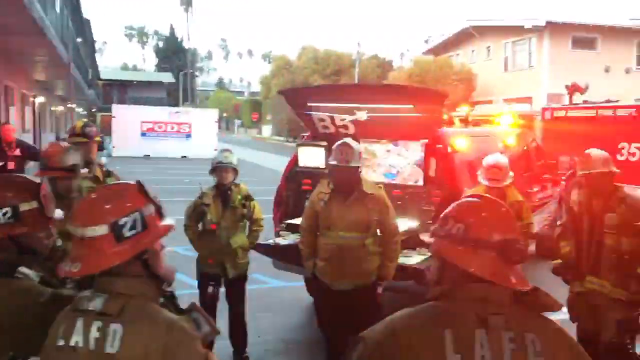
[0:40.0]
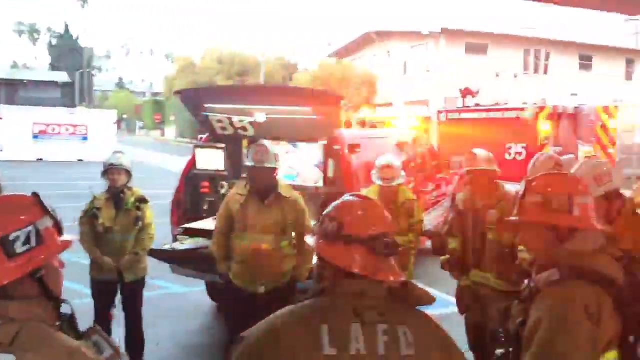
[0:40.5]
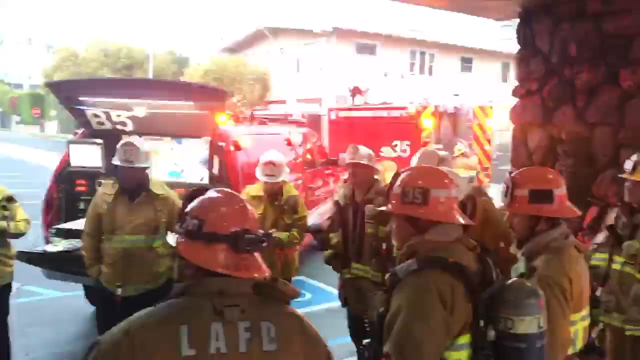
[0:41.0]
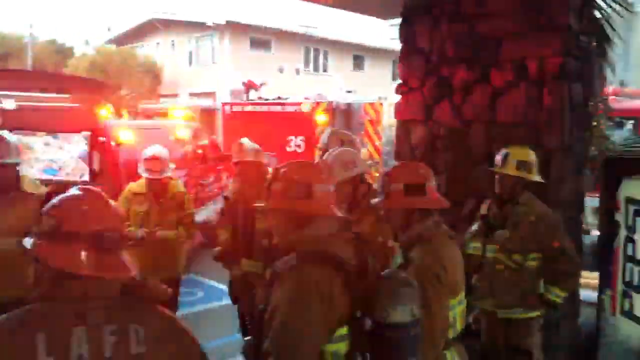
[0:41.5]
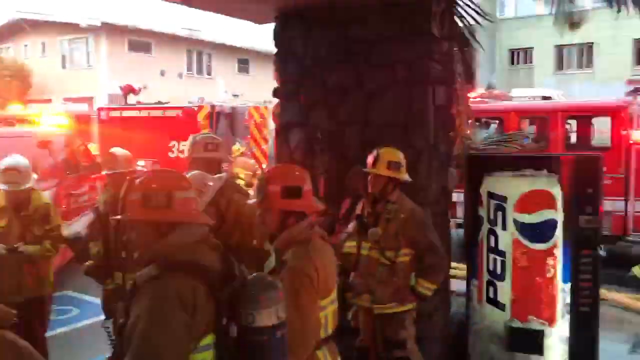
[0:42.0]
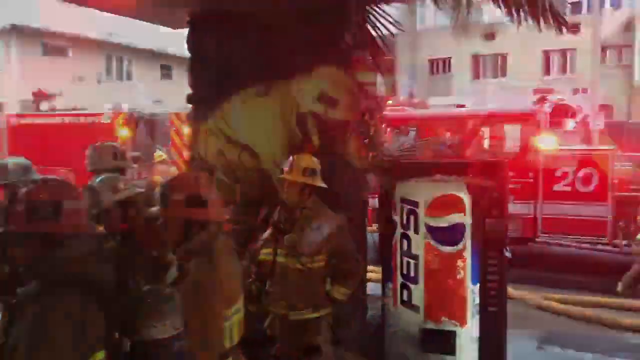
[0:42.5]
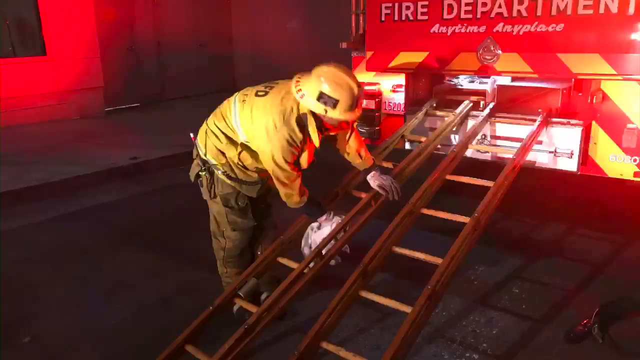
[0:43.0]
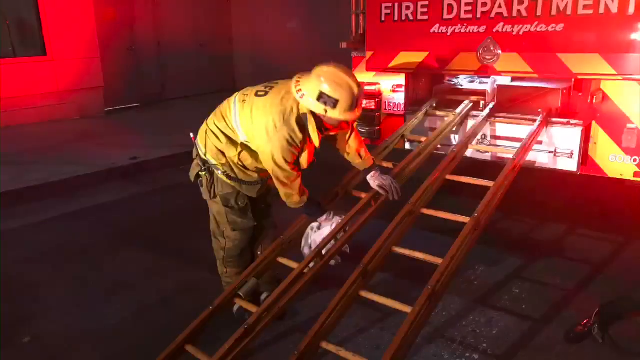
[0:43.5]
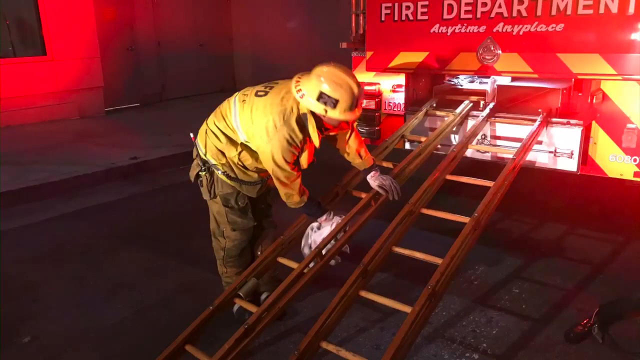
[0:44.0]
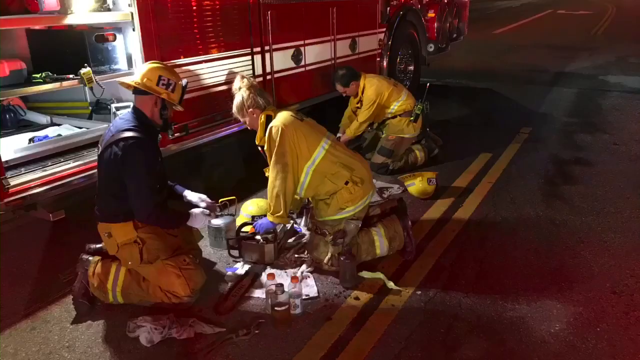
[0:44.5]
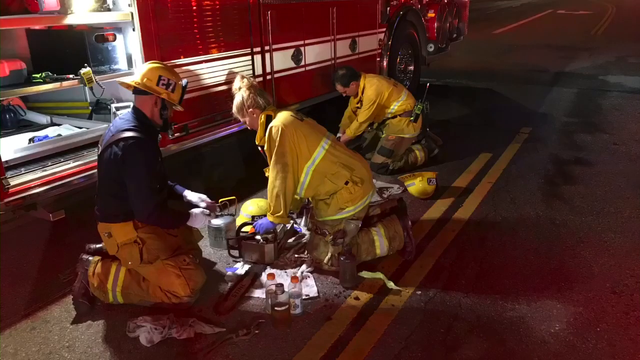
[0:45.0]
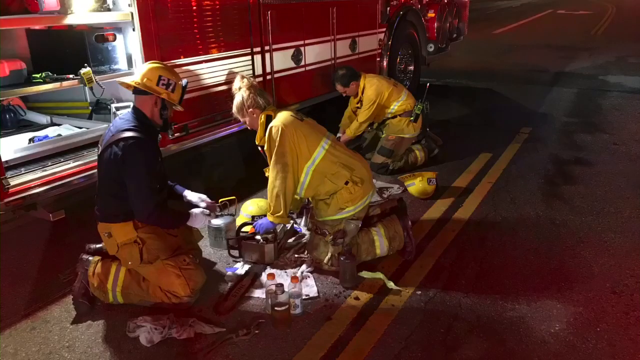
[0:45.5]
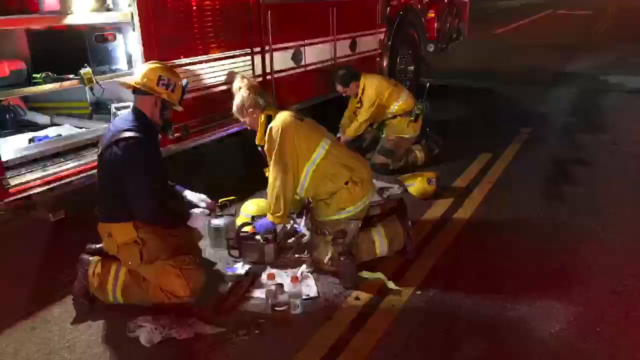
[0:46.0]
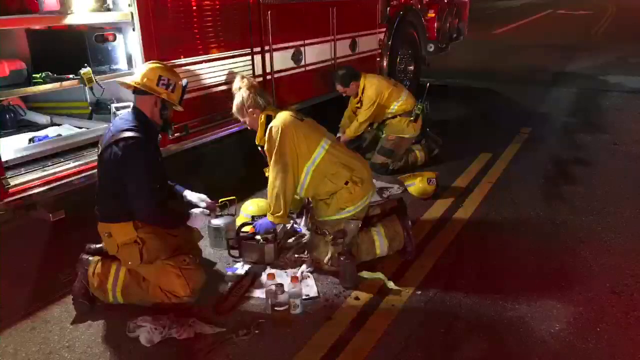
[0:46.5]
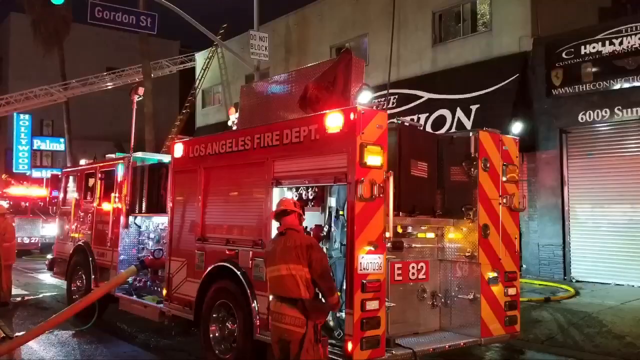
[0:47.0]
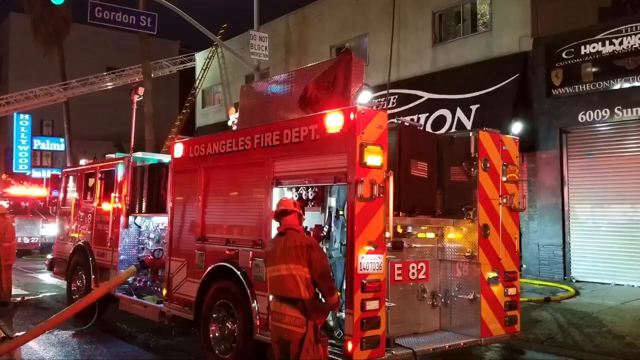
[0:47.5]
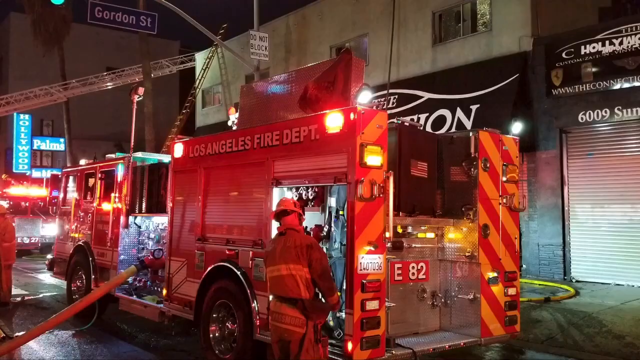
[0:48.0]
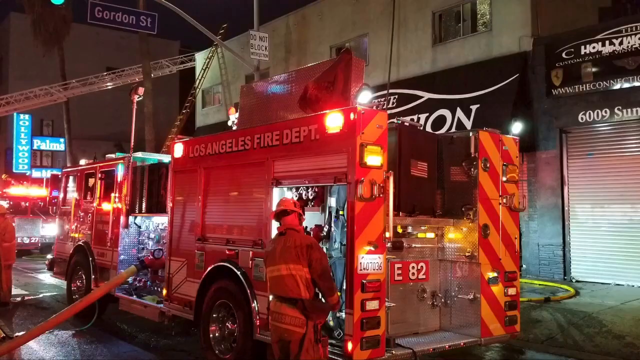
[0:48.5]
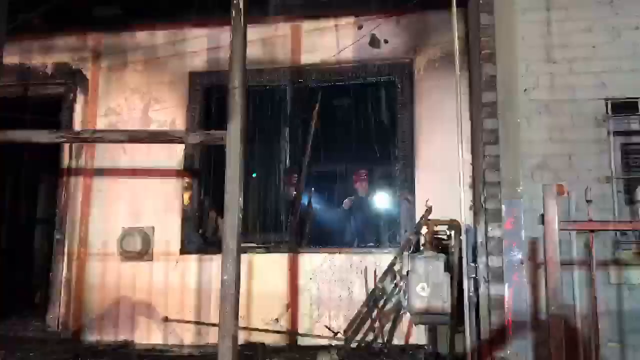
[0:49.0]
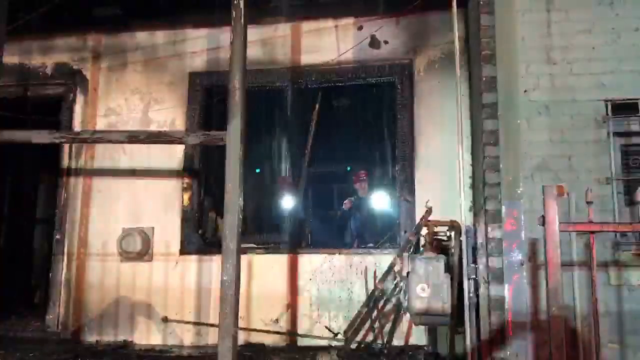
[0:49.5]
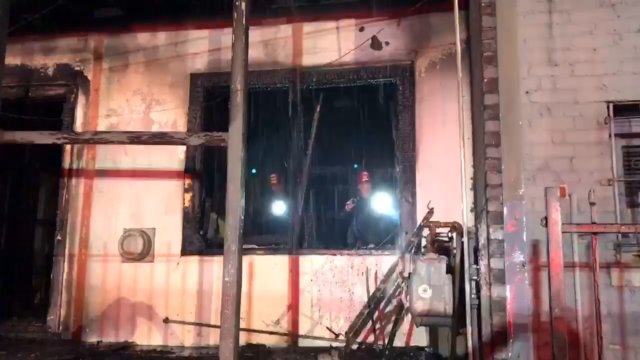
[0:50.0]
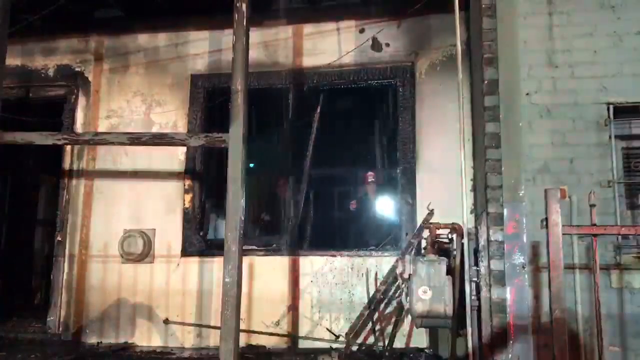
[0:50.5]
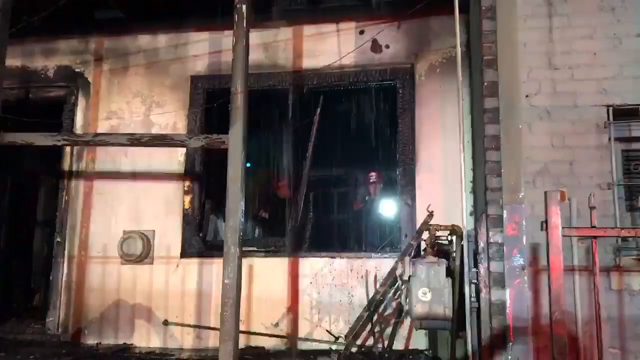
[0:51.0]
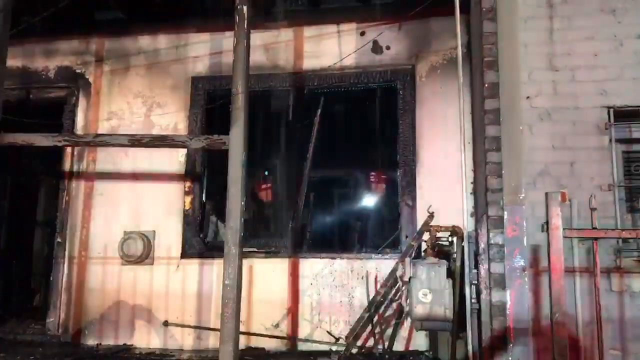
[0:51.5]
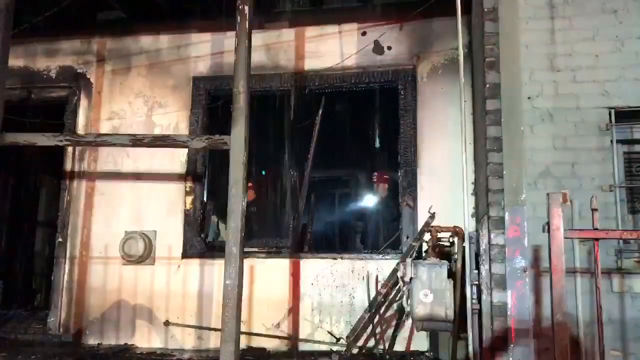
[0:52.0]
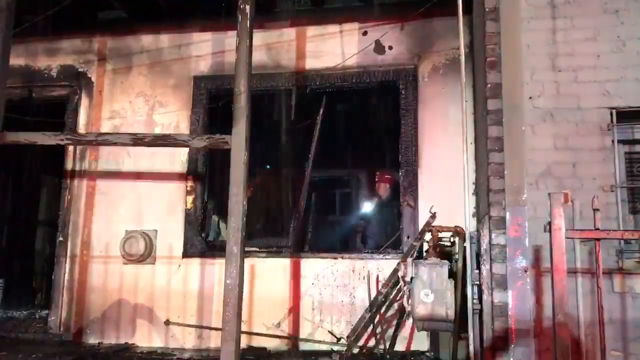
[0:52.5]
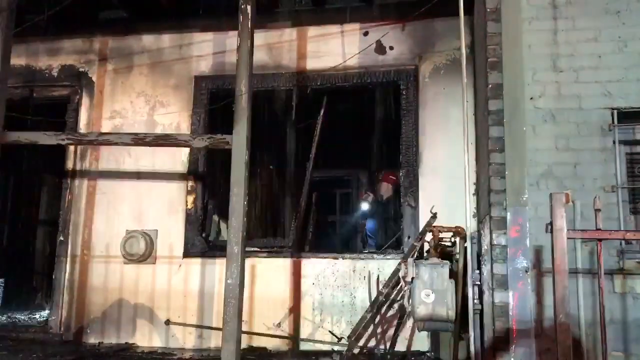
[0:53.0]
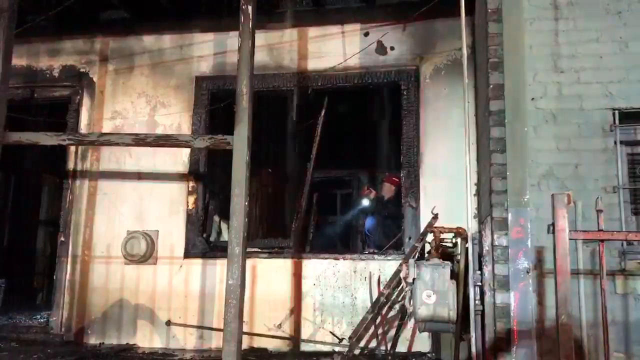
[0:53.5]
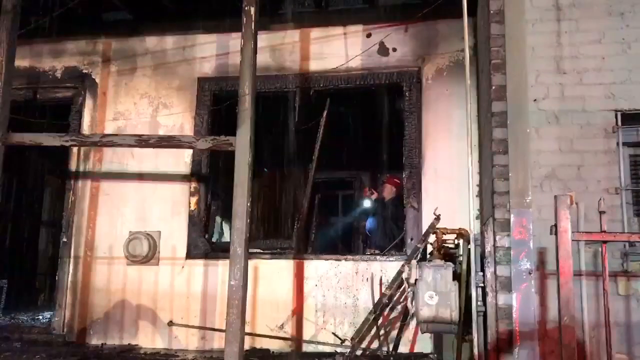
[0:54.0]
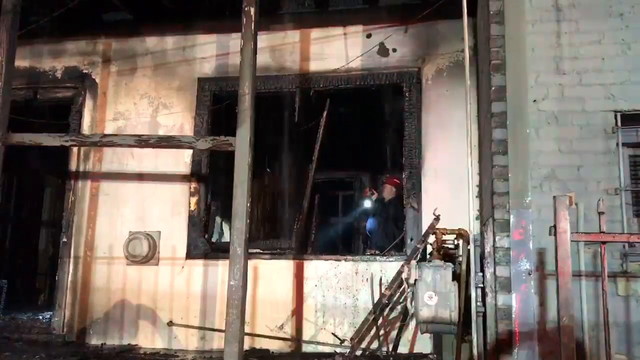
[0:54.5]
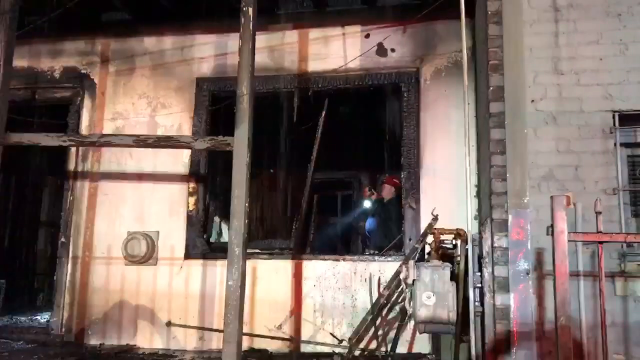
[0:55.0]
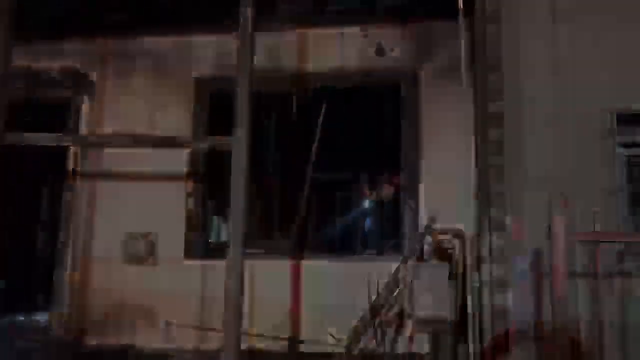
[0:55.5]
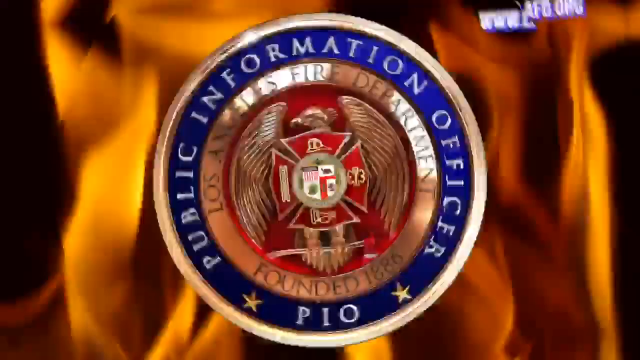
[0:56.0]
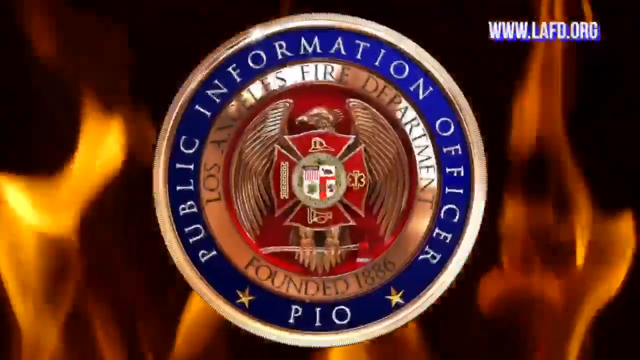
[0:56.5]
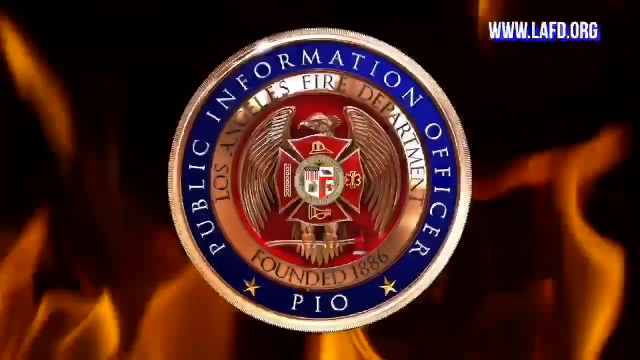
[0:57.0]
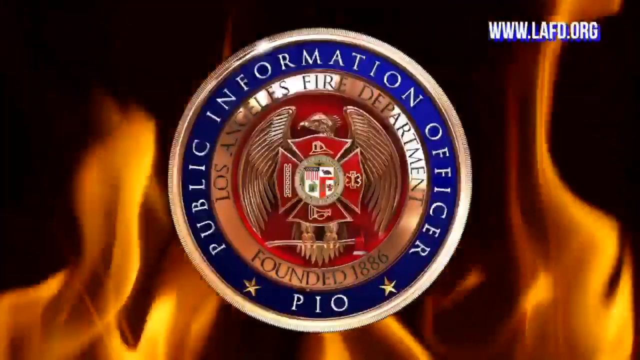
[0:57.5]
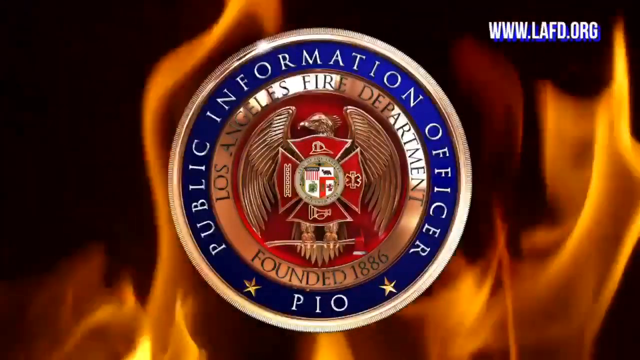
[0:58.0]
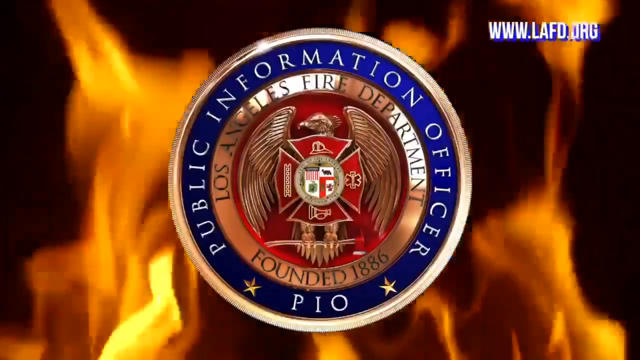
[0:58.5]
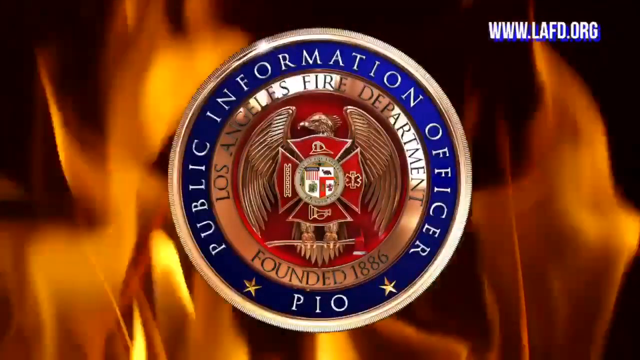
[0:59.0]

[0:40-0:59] The firefighters are grouped together, discussing in a meeting, and appear to be planning. They prepare their gear and go into the building to inspect it. Inside, the building is in poor condition, and something seems to be dripping from the ceiling. There is no light source inside, and the men inside carry a torch. One of them wears a red cap and a black jacket. Afterward, the video indicates that the footage was covered by the LAFD, giving its website, www.lafd.org.